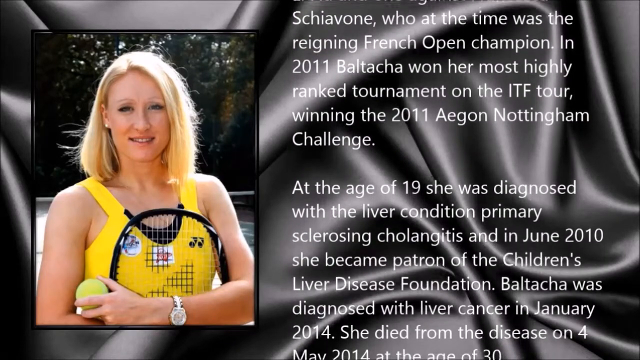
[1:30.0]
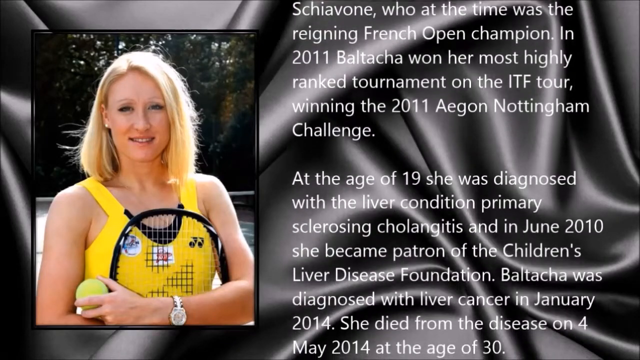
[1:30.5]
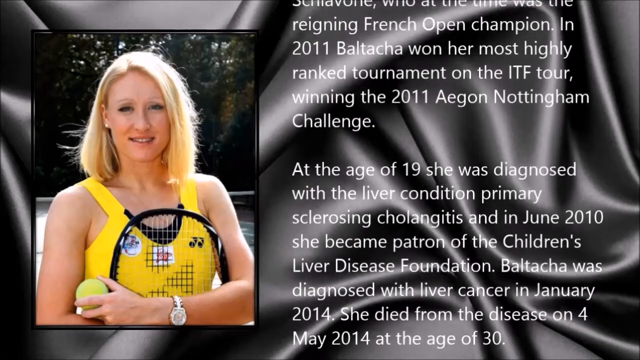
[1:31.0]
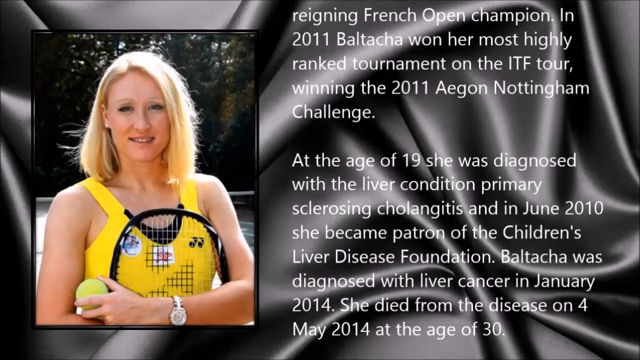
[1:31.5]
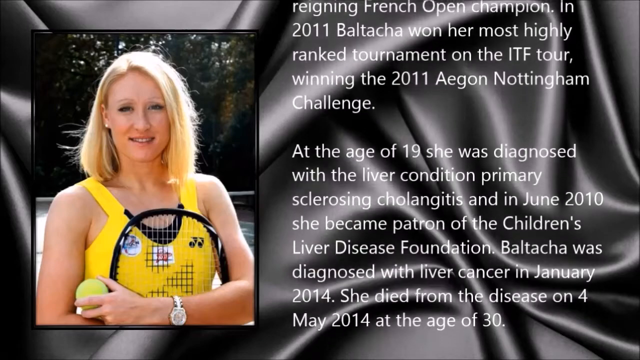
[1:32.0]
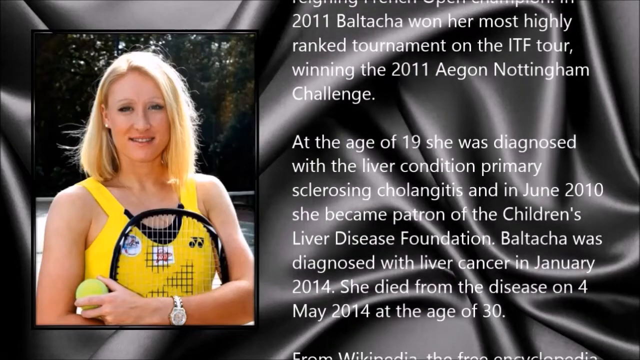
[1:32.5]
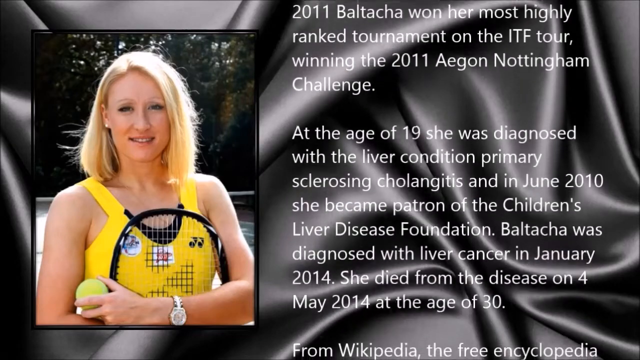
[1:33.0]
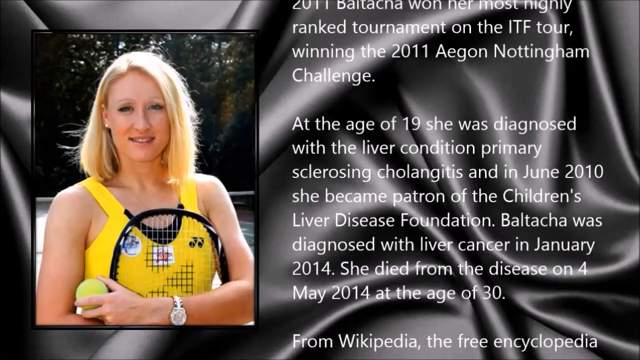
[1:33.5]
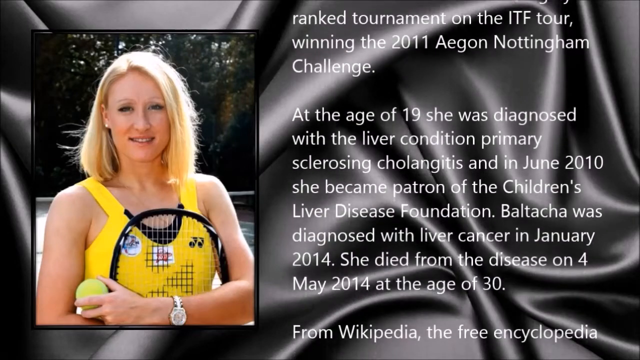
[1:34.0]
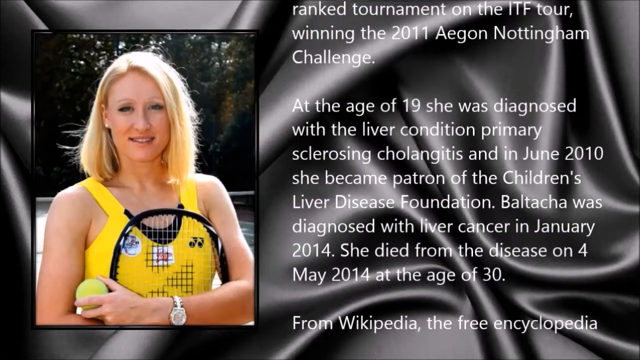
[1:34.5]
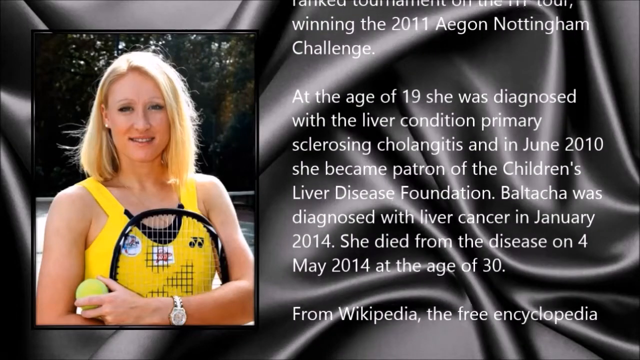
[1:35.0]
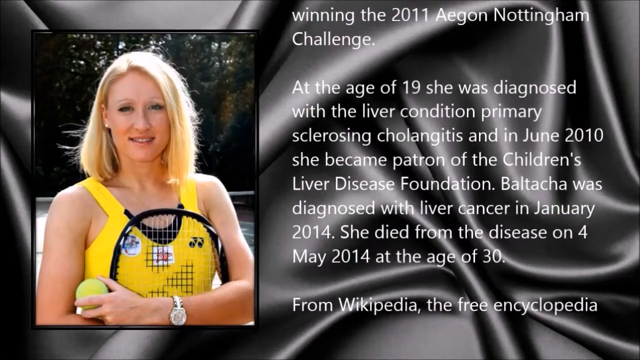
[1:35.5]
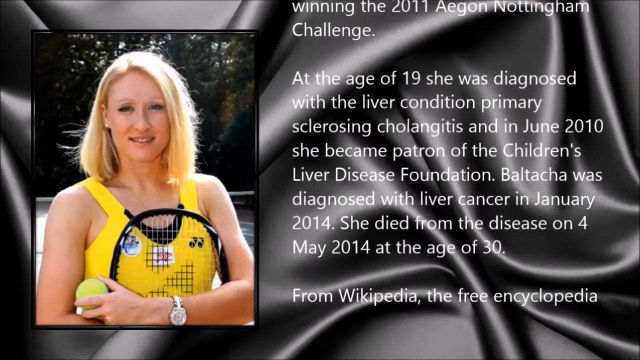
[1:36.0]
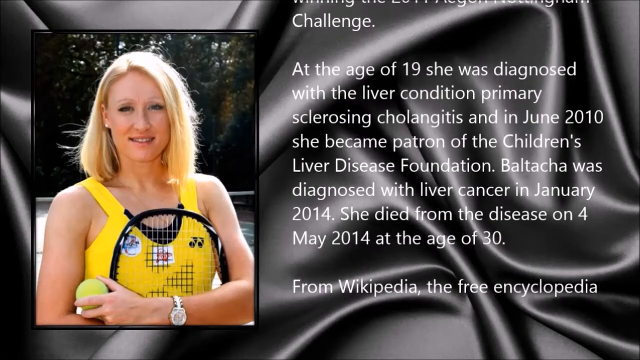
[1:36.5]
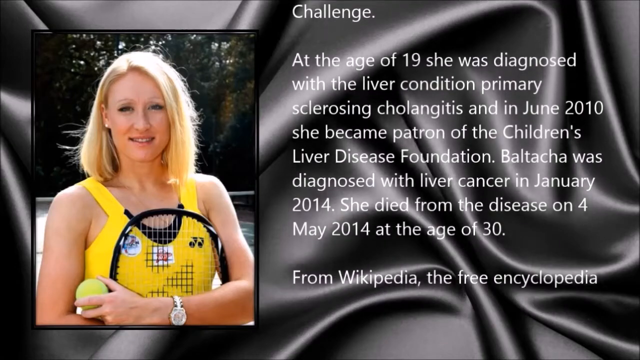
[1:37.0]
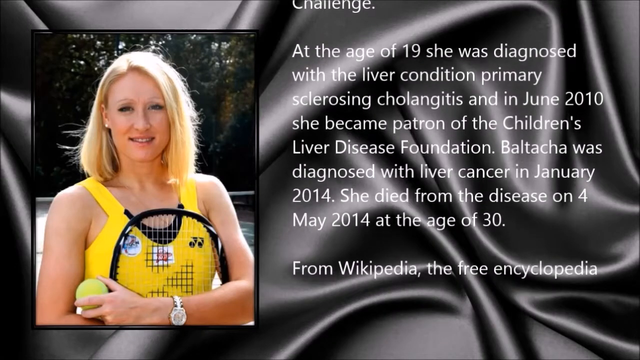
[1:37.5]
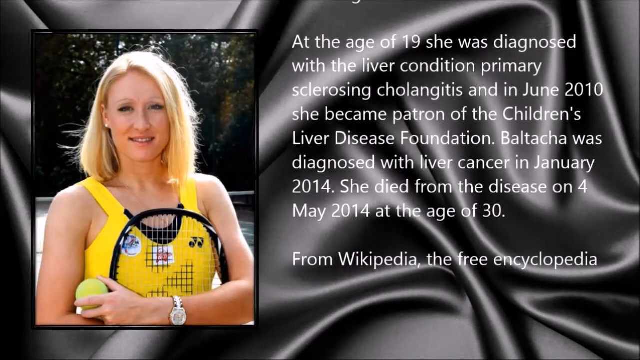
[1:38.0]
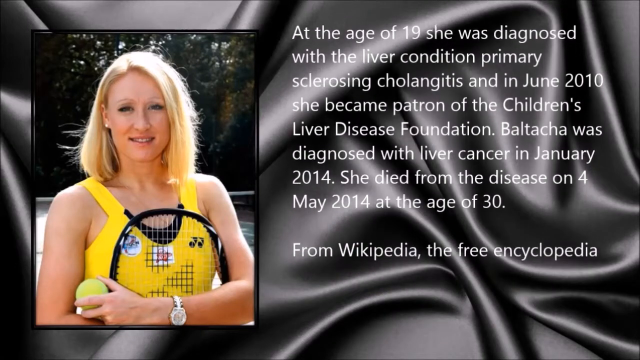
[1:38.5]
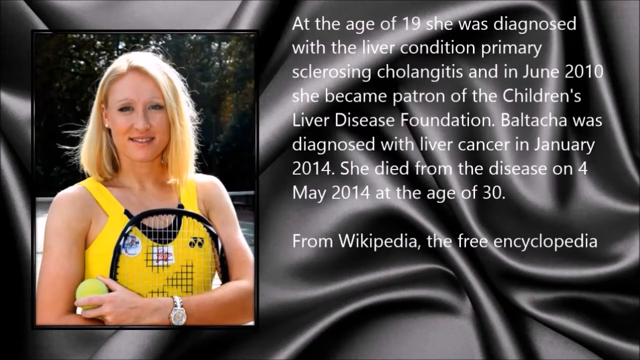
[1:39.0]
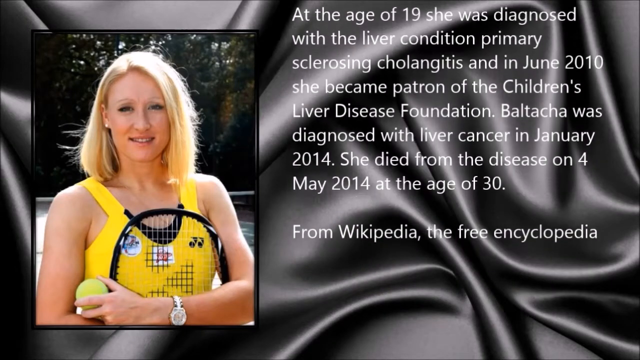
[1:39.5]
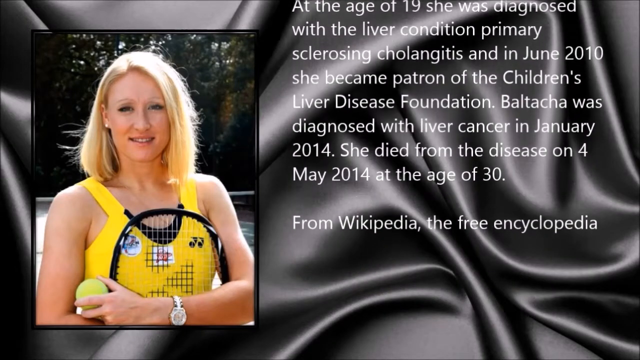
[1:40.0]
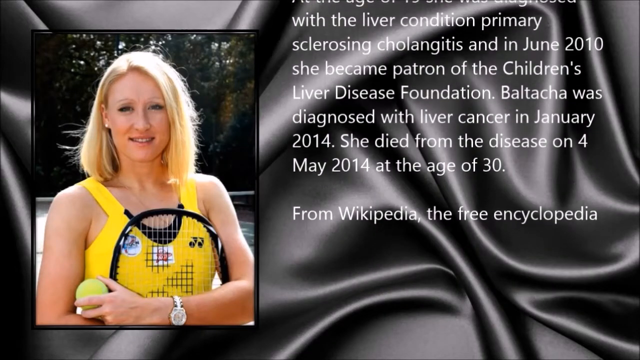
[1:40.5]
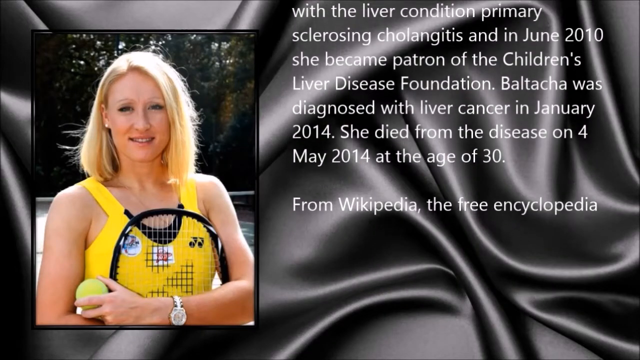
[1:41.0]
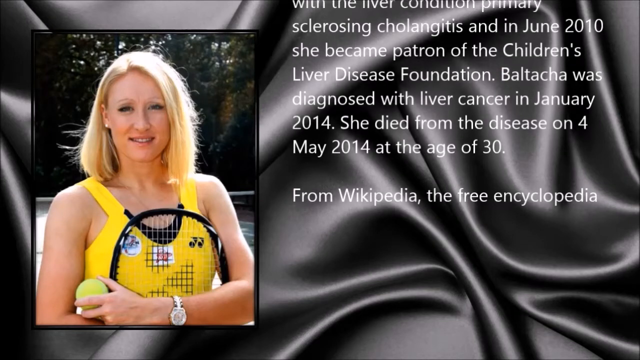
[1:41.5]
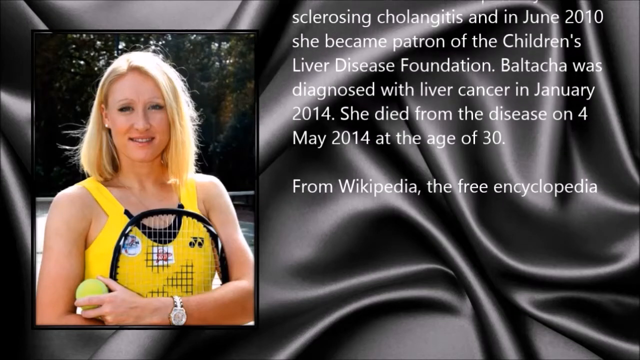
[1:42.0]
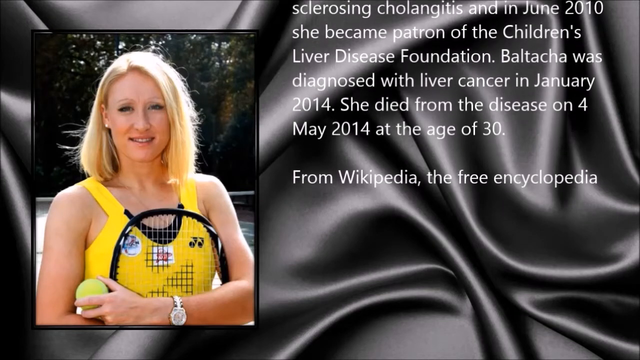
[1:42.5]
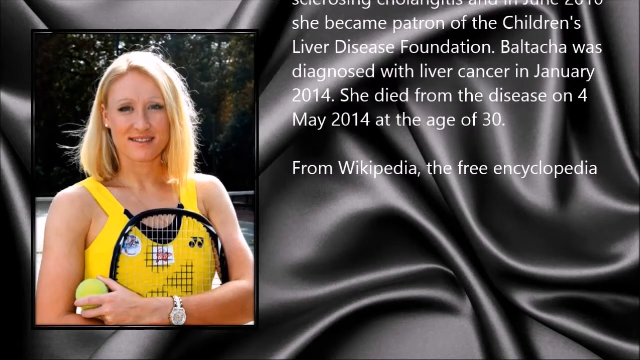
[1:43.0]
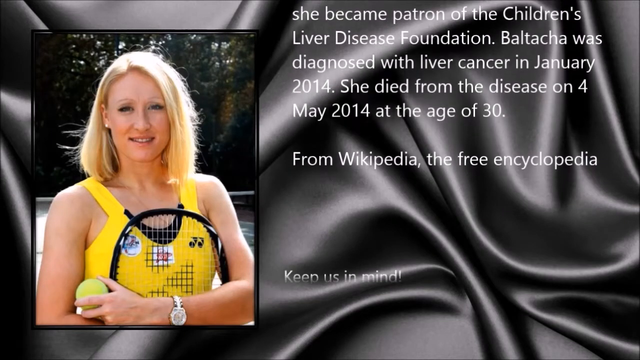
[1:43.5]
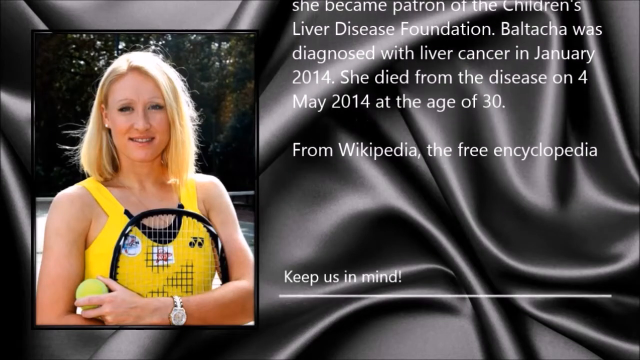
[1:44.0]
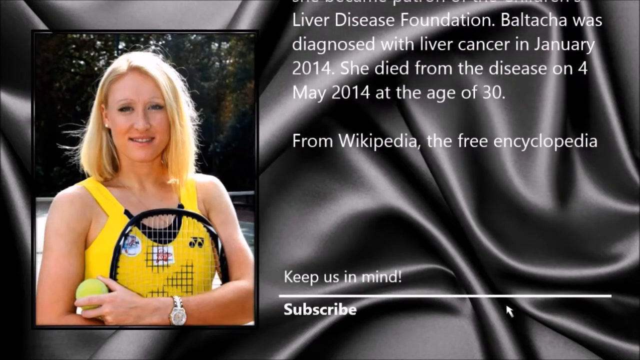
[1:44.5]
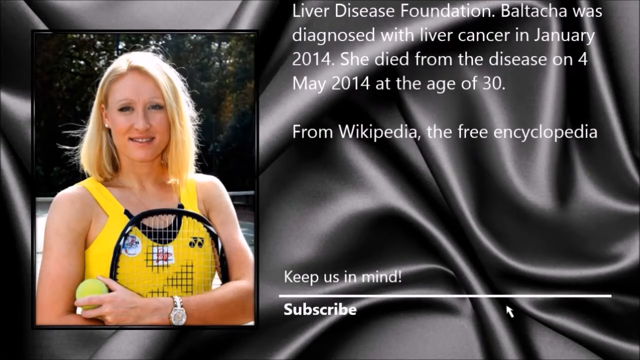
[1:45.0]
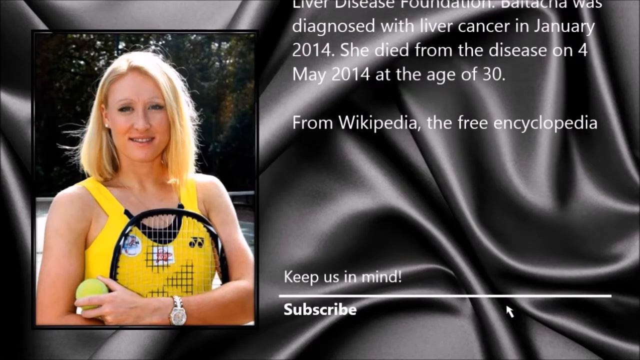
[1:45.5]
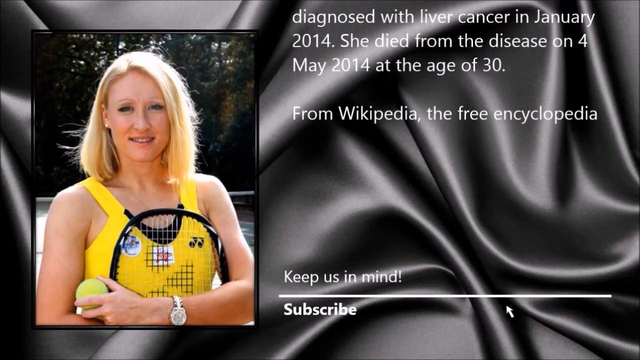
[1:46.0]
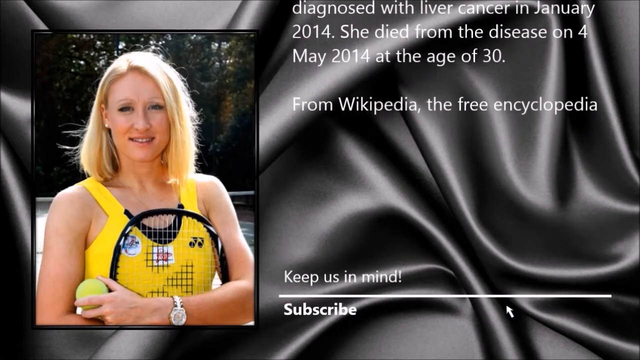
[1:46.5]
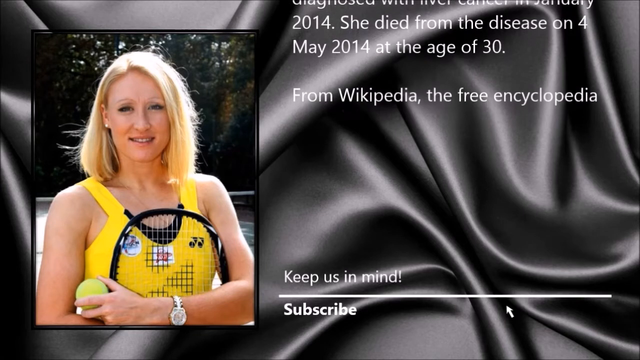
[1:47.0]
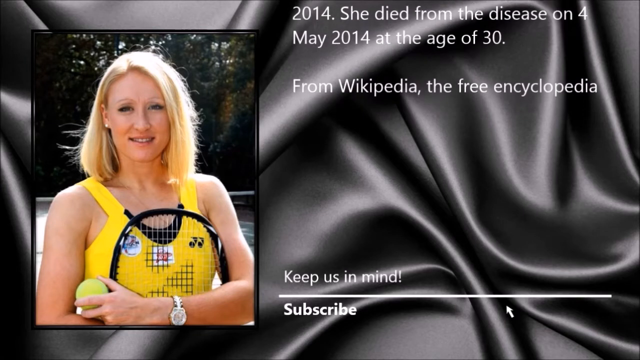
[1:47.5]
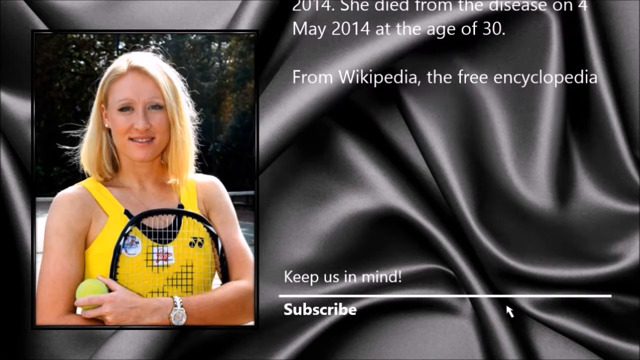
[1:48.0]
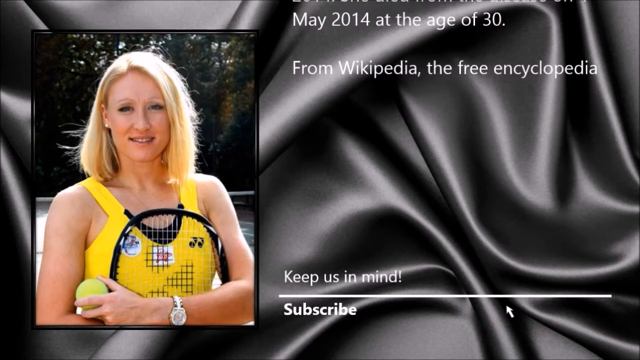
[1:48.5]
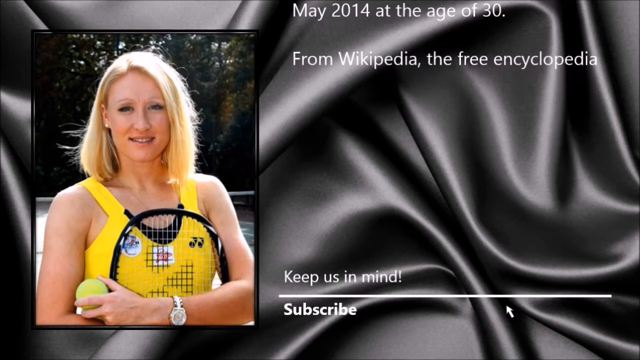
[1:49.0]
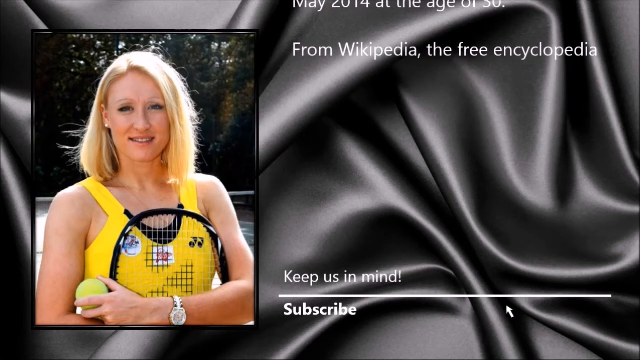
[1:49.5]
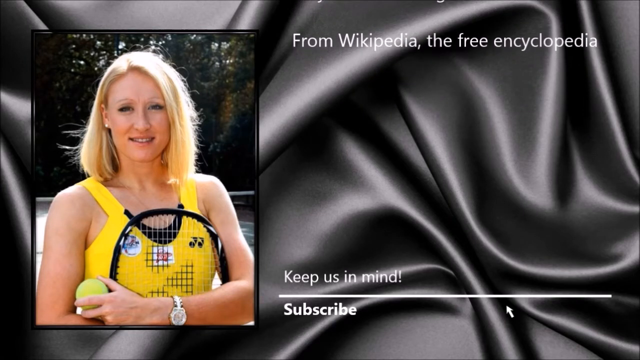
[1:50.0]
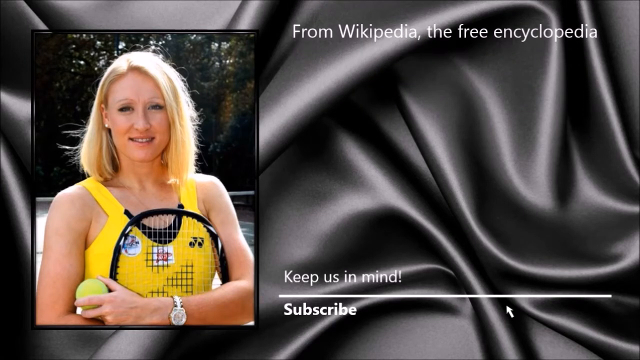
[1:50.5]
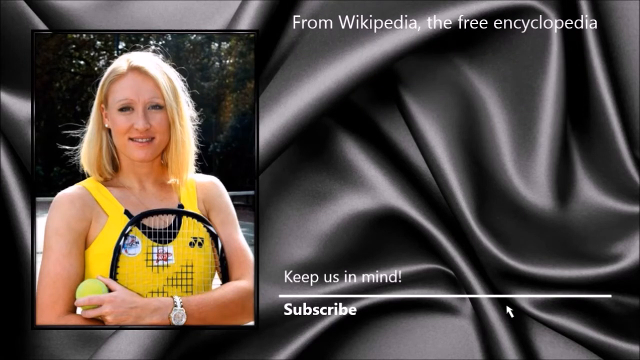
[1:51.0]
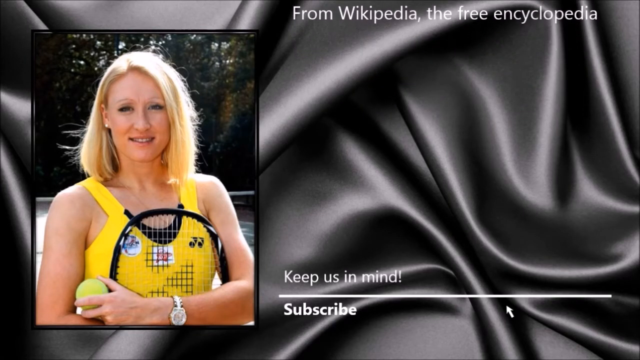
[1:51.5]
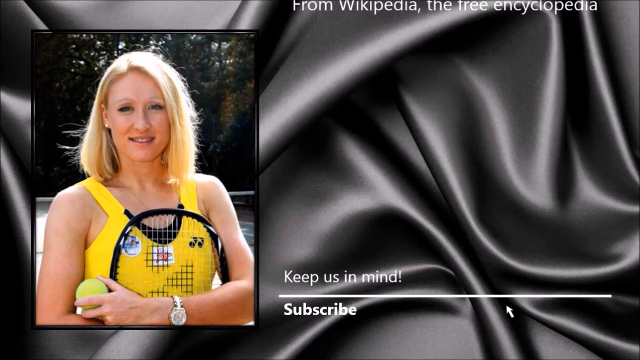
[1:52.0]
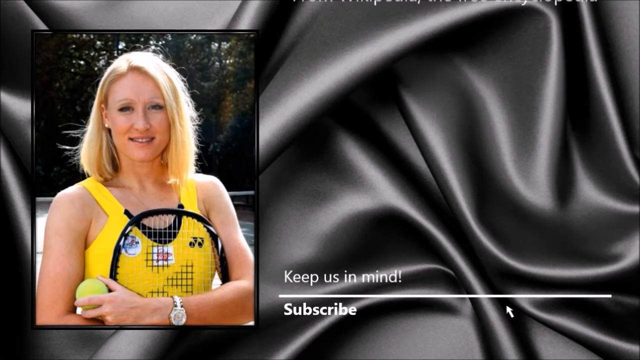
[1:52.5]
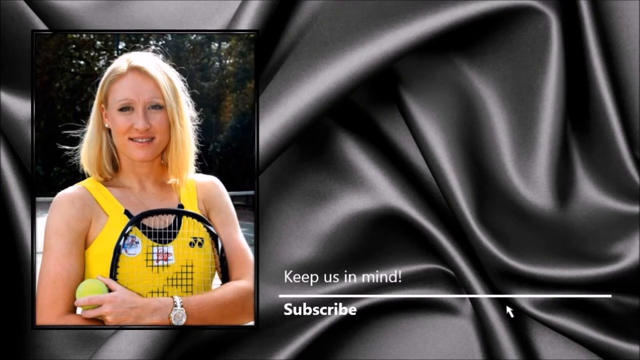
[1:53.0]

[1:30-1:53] The screen looks like a piece of black silk material with wrinkles in it. On the left side is a picture of a long-haired blonde woman facing the camera, wearing diamond earrings and a yellow tank top. She holds a black tennis racket up to her chest with her arms crossed over the racket and her chest, a tennis ball in her left hand and a watch on her left wrist. In the background are forests, woods and a lot of trees. To the right of her, text comes up from the bottom of the screen: "At the age of 19 she was diagnosed with the liver condition primary sclerosing cholangitis and in June 2010 she became patron of the Children's Liver Disease Foundation. Baltacha was diagnosed with liver cancer in January 2014. She died from the disease on 4 May 2014 at the age of 30." Underneath that it reads "from Wikipedia the free encyclopedia."